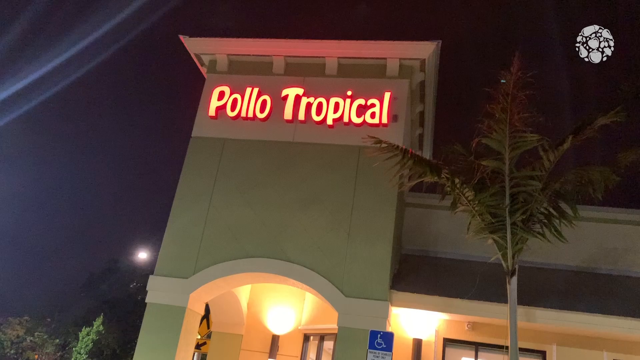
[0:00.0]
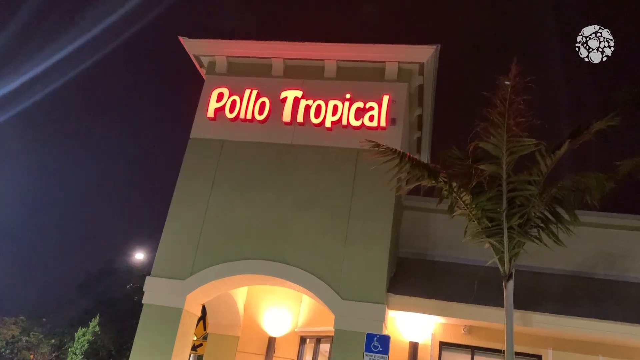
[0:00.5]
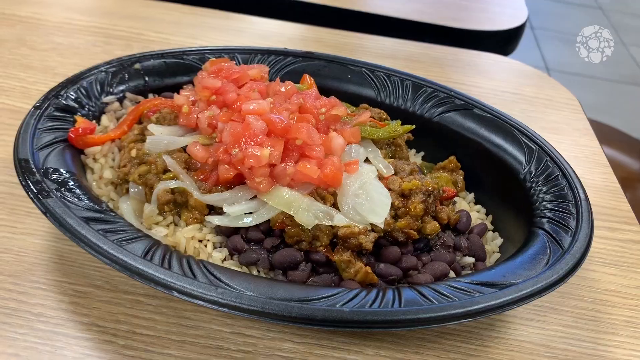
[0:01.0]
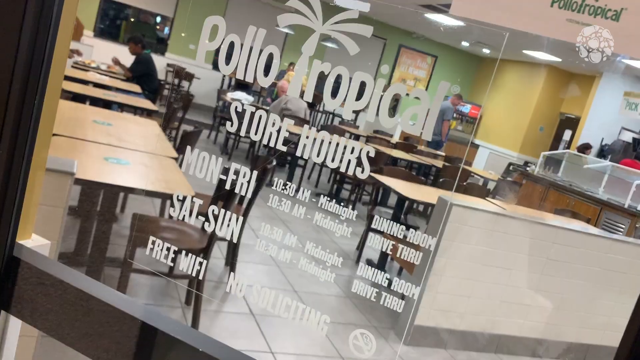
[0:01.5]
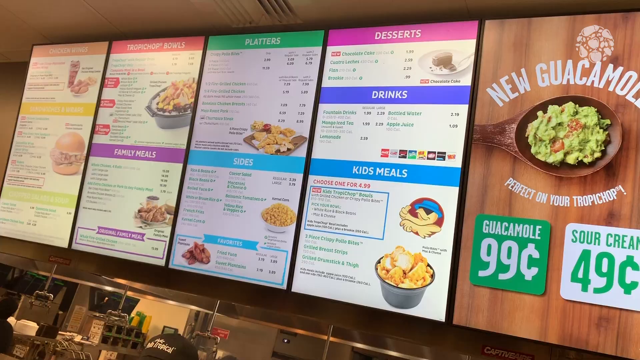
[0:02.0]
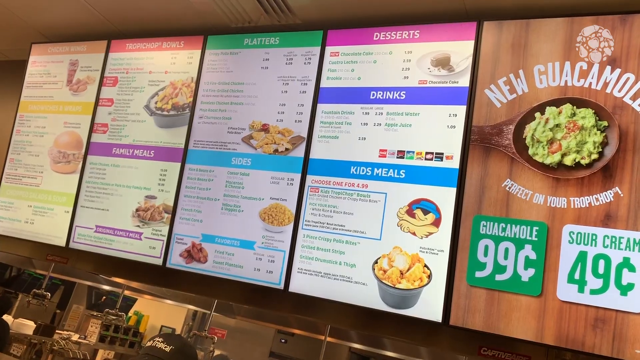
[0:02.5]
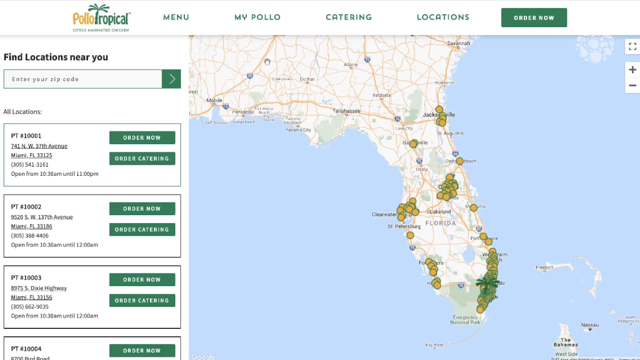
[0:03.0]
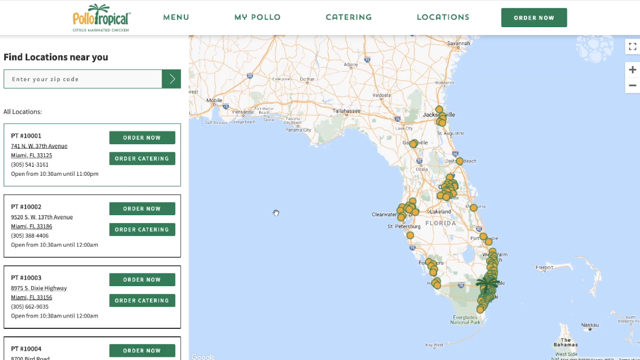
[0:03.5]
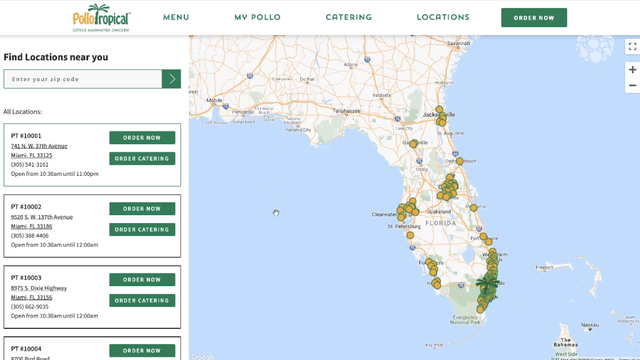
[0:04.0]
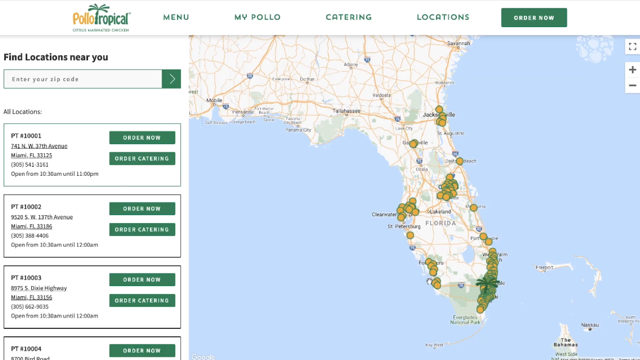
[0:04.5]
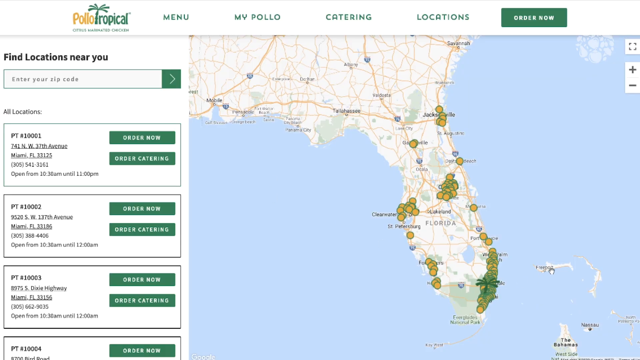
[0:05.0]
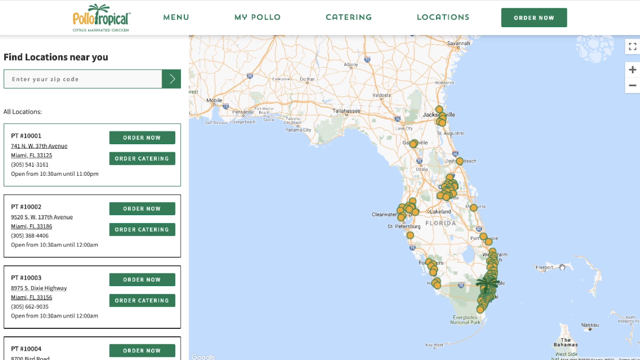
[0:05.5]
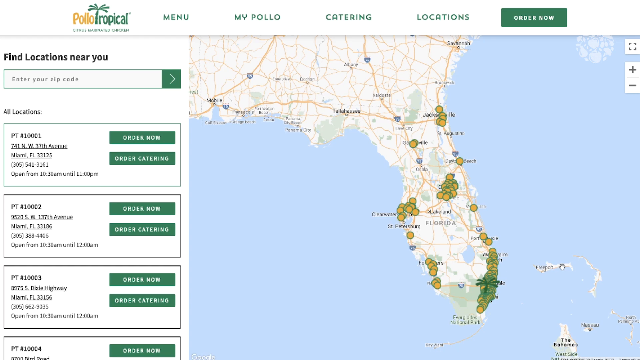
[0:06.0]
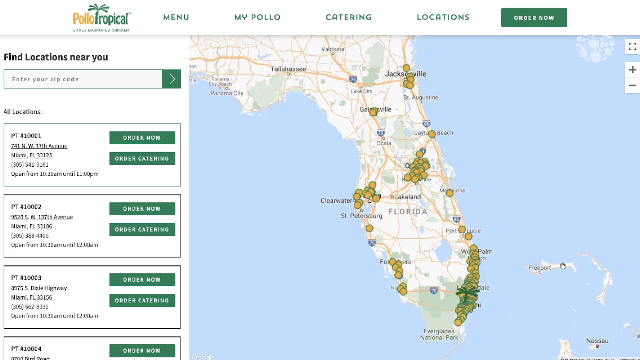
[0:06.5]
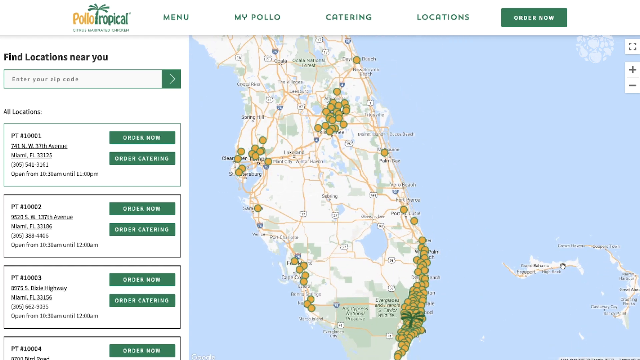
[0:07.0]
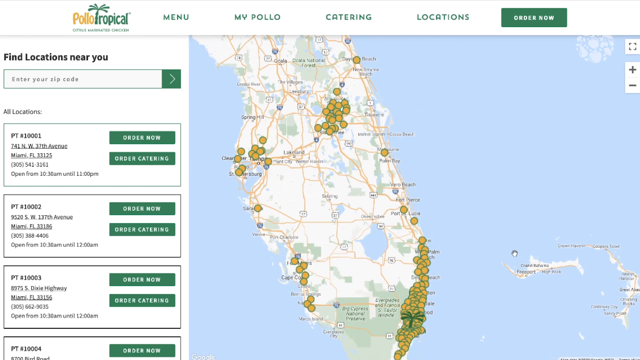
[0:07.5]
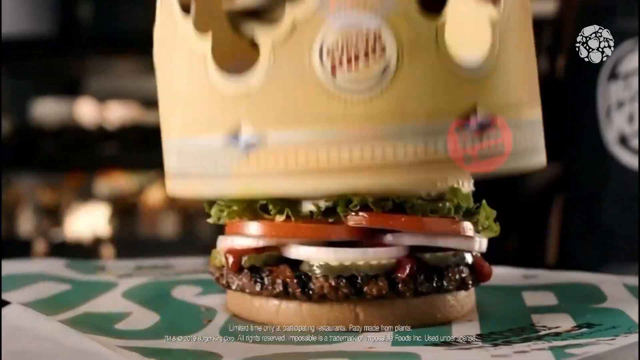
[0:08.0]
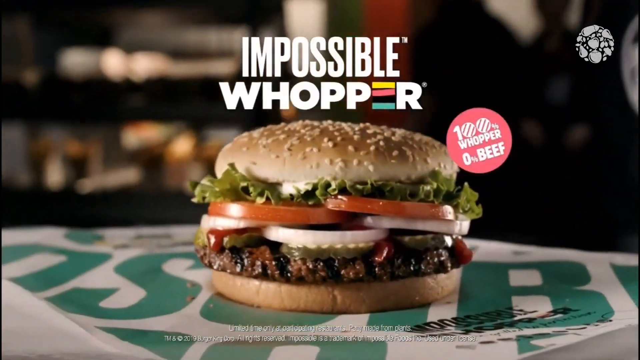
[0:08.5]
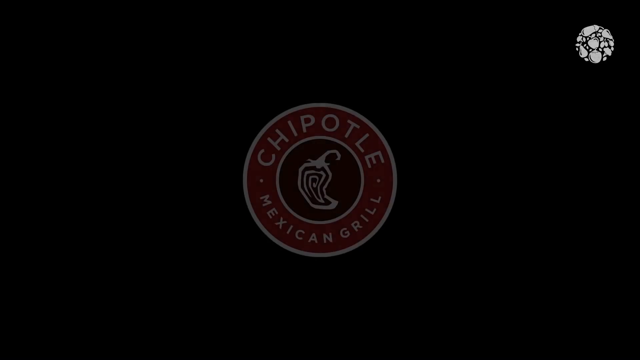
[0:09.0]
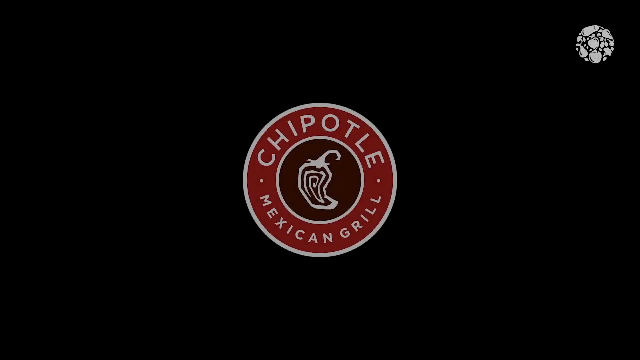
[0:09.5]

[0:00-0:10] A building bears the inscription "Polo Tropica," with a palm tree in view. Inside, dishes, food and other things are shown. The store hours are listed: Monday to Friday, 10:30 a.m. to midnight for the dining room and 10:30 a.m. to midnight for the drive-through, with Saturday and Sunday hours as well. Free Wi-Fi is also listed. Many items are displayed, including the new guacamole for 99 cents and sour cream for 49 cents, plus desserts, drinks, a kids meal and family meals. A page with a map and a search bar appears, apparently their ordering page, showing the menu, "my polo," catering, an application and "order now."